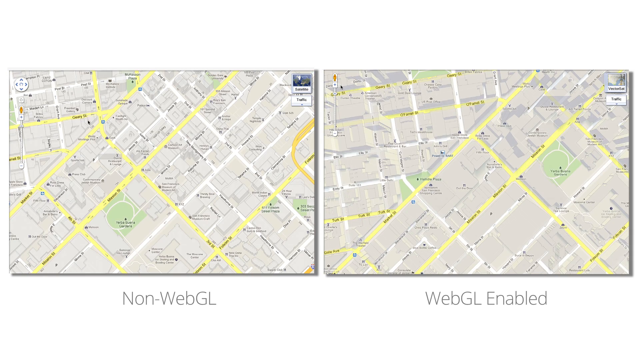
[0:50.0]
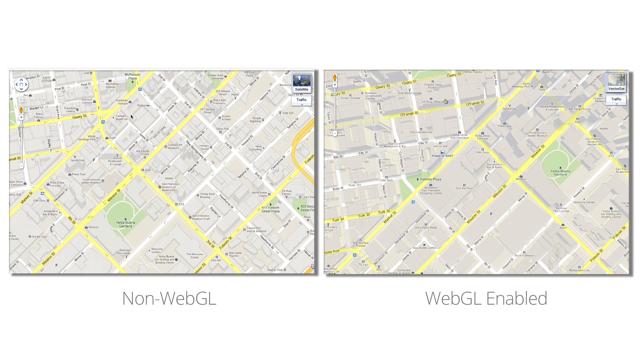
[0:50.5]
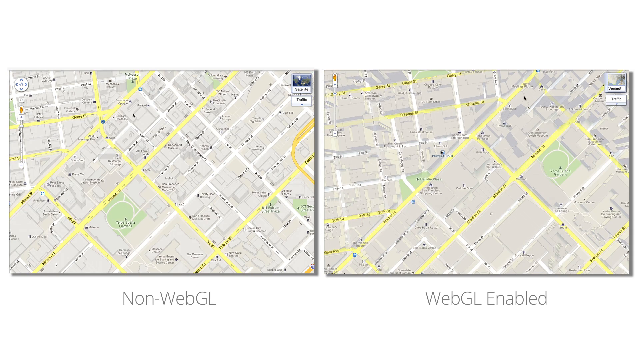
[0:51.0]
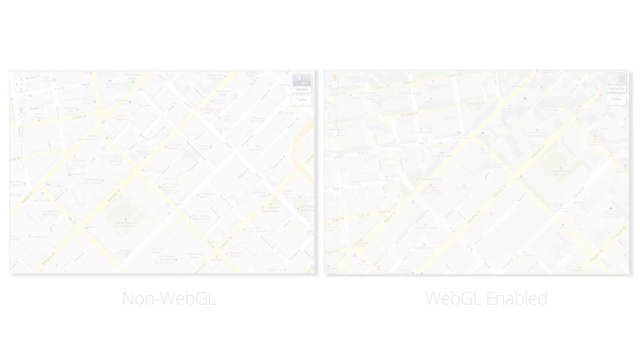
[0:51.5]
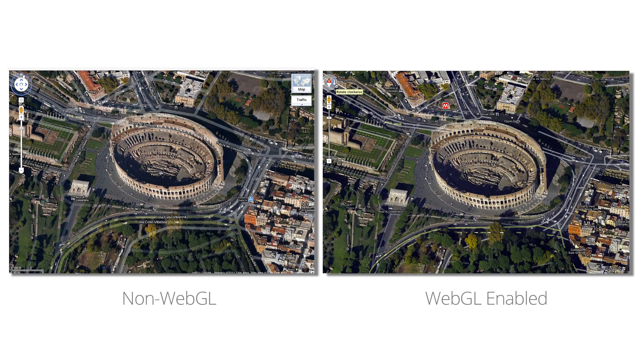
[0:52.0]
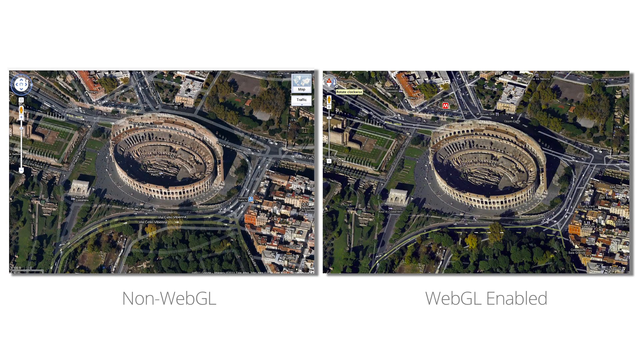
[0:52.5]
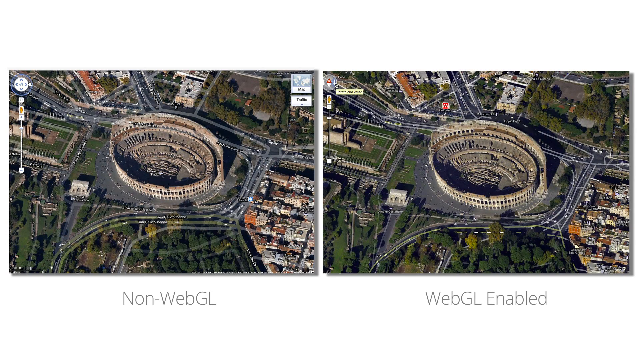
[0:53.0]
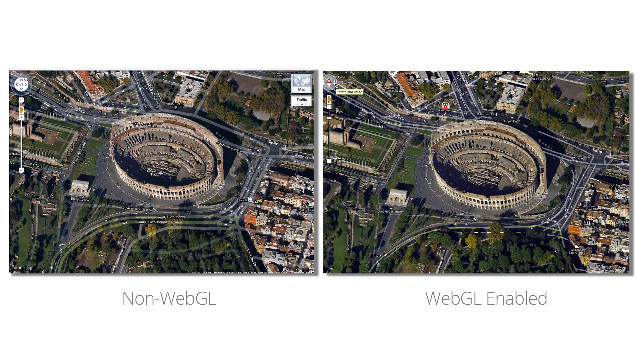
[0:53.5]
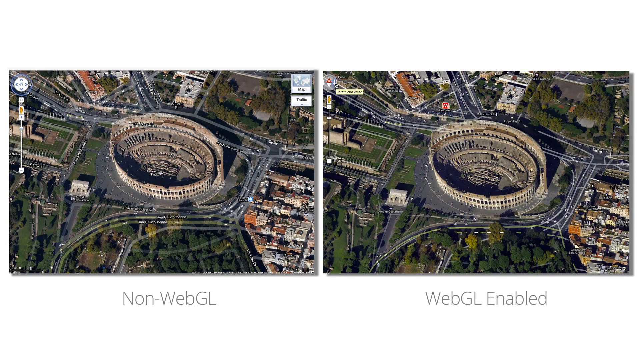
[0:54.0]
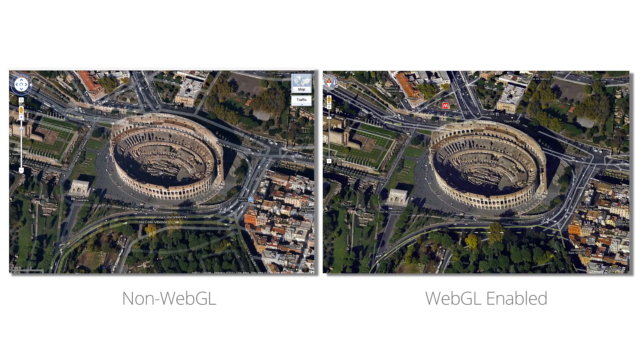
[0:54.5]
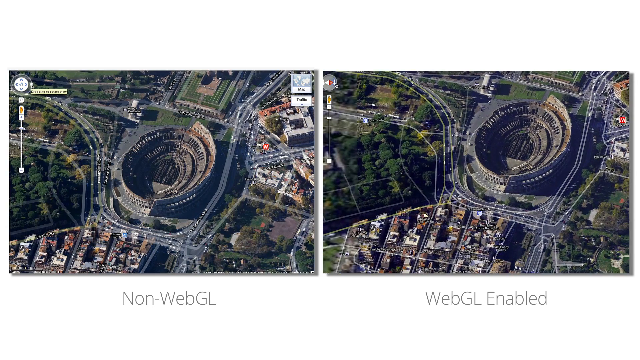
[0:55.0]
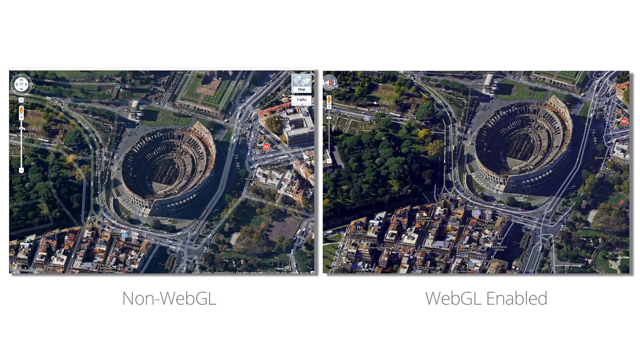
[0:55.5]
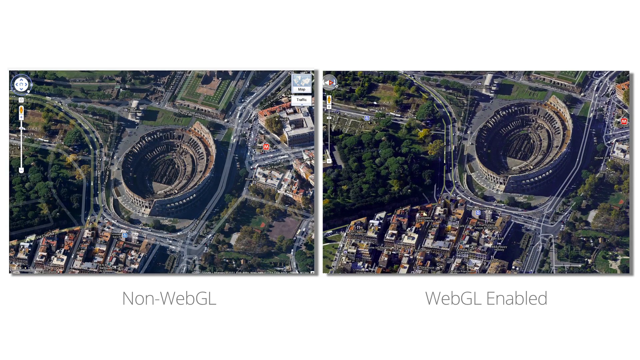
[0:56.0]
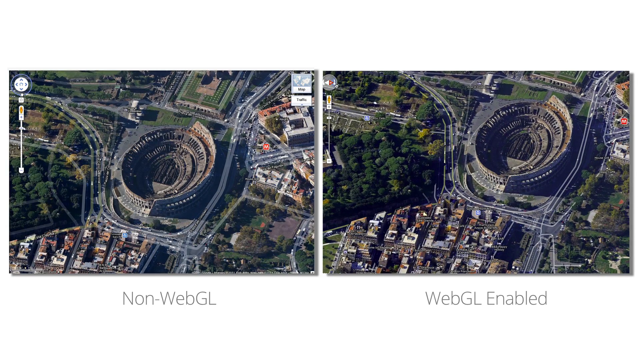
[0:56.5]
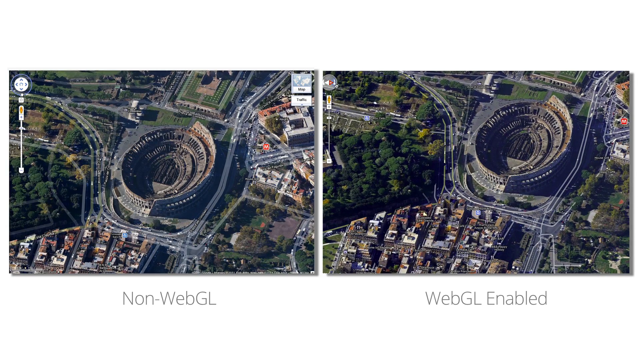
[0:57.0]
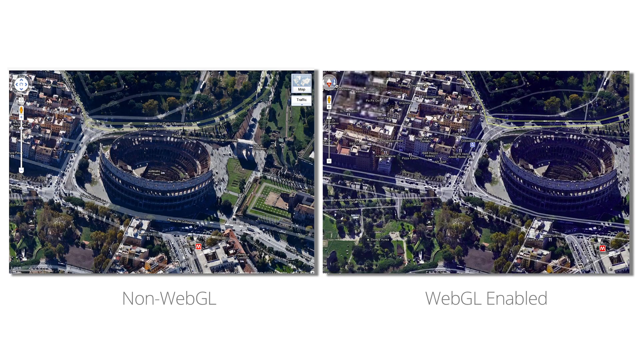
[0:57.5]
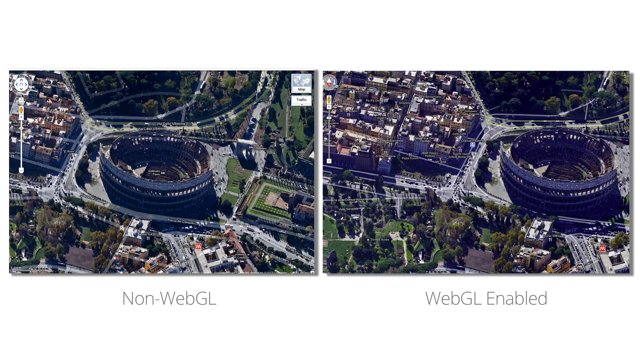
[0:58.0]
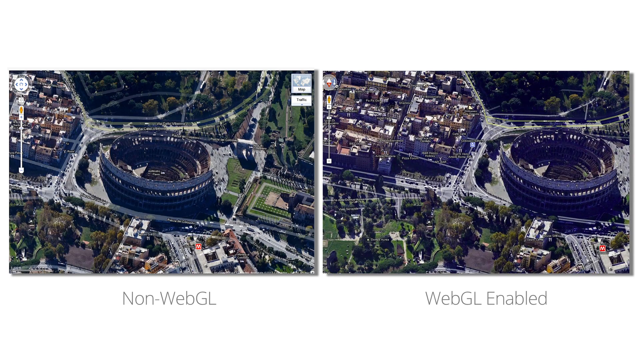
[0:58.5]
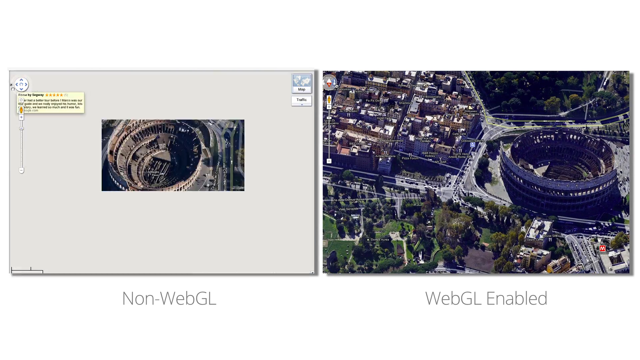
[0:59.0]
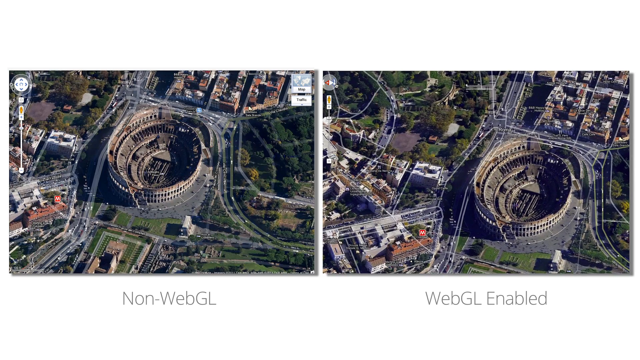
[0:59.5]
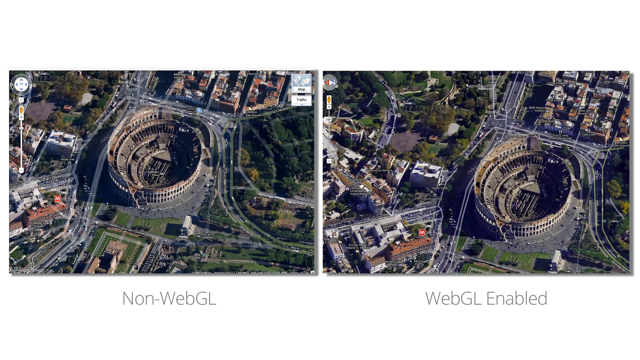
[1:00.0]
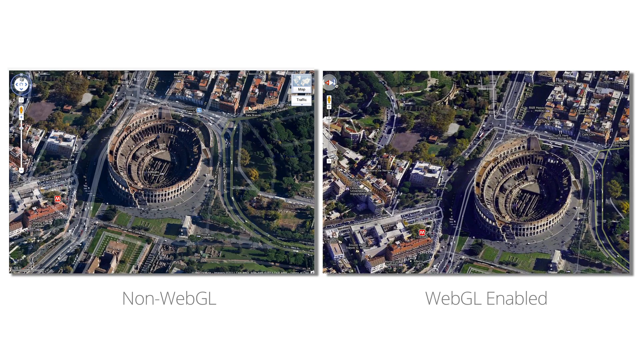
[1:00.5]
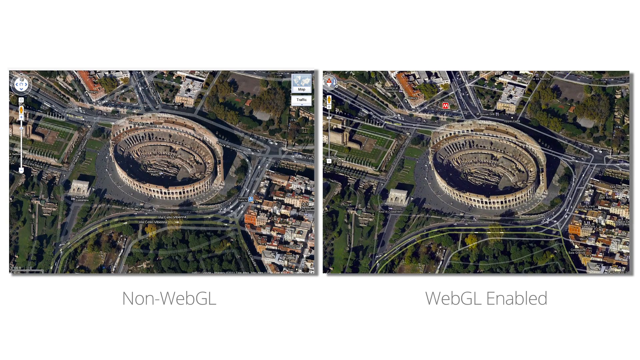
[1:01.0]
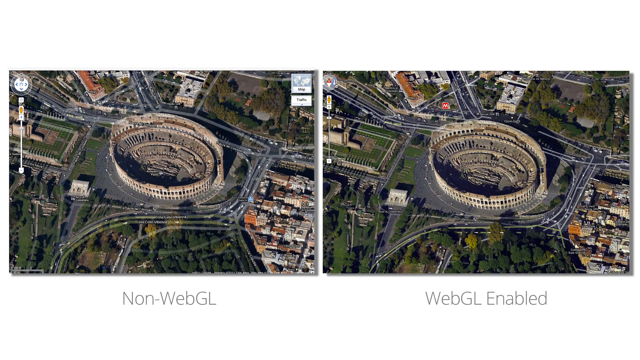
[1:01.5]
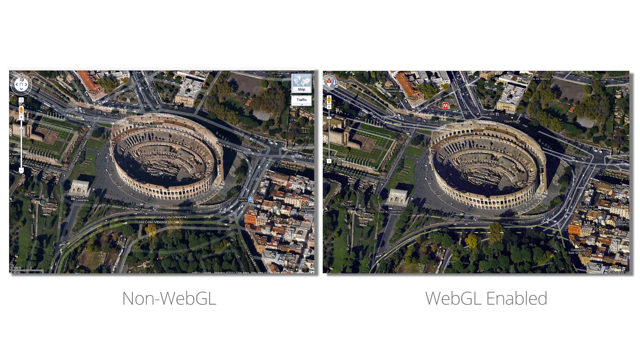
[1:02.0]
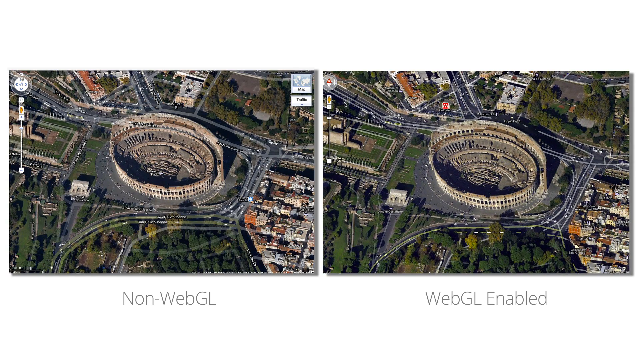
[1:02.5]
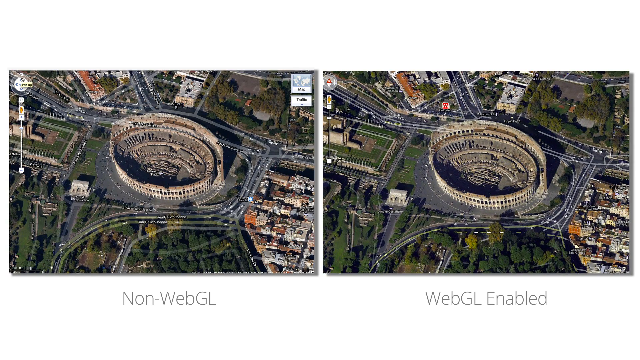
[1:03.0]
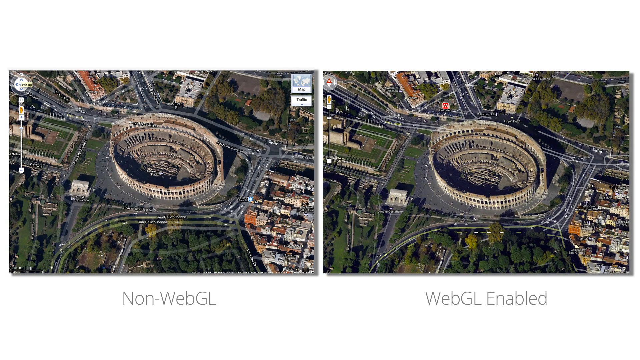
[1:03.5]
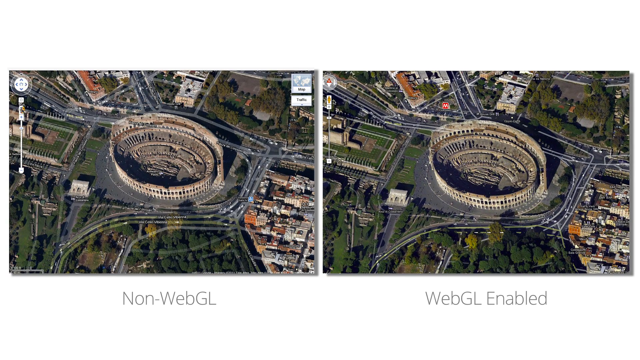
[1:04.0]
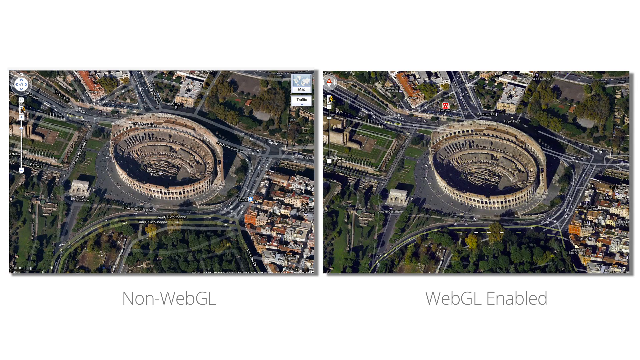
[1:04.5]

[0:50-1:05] The side-by-side comparison of the non-WebGL and WebGL-enabled versions of Google Maps continues. When the viewing direction on a location is changed, the WebGL version updates almost in real time, showing the movement, while the non-WebGL version just clips to a different image. The video then goes to a street view, with a mouse moving over and clicking the location. The WebGL-enabled version is presented as a higher-quality image rendering.